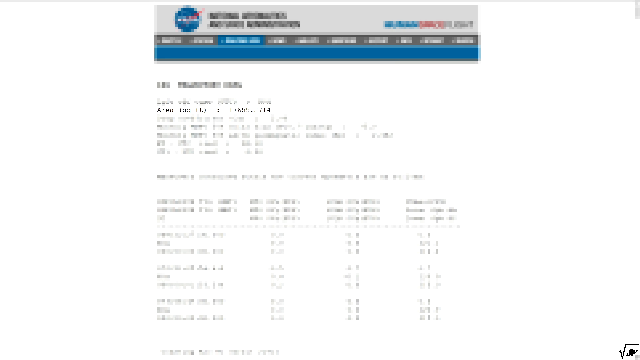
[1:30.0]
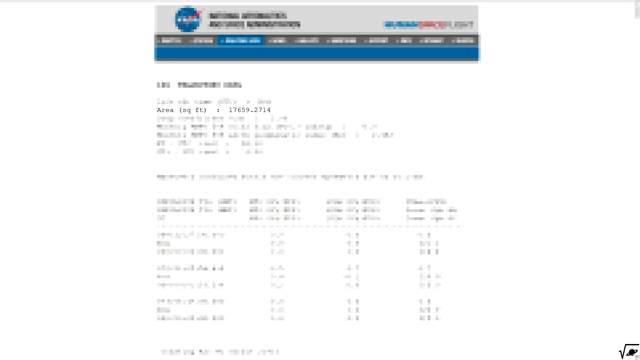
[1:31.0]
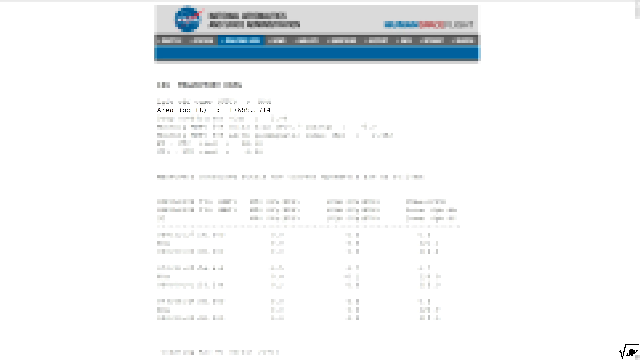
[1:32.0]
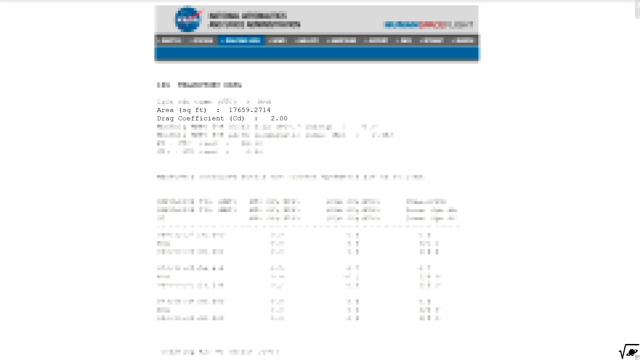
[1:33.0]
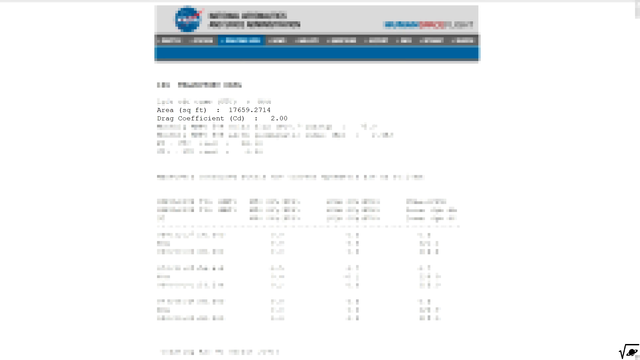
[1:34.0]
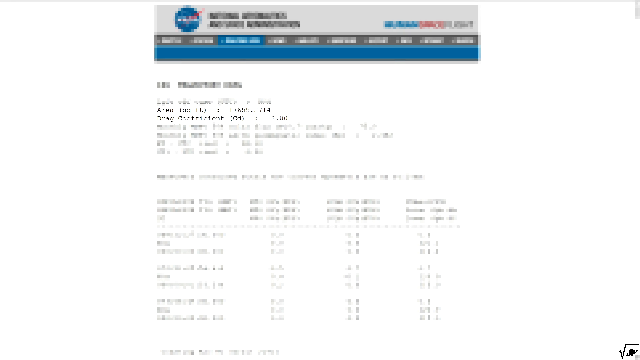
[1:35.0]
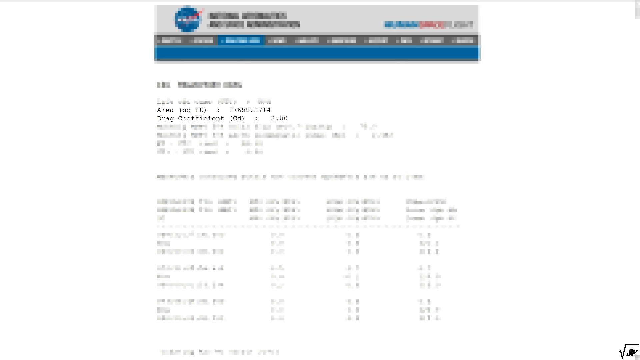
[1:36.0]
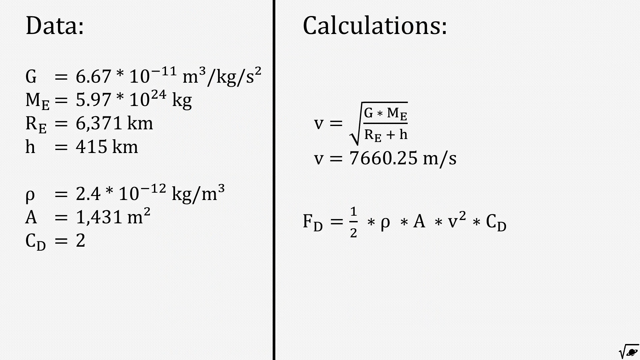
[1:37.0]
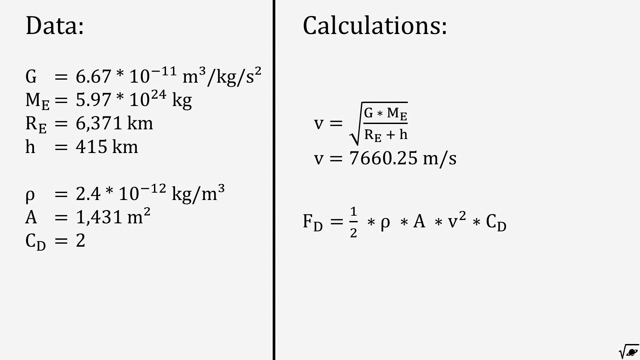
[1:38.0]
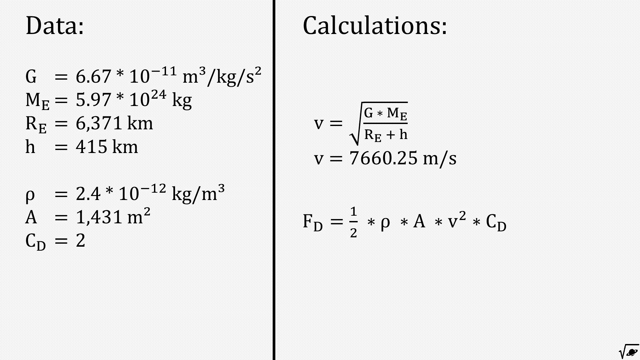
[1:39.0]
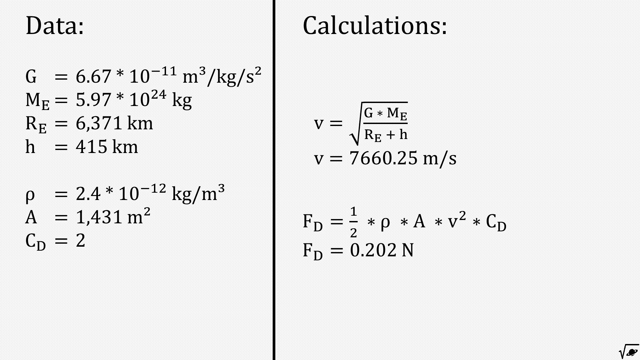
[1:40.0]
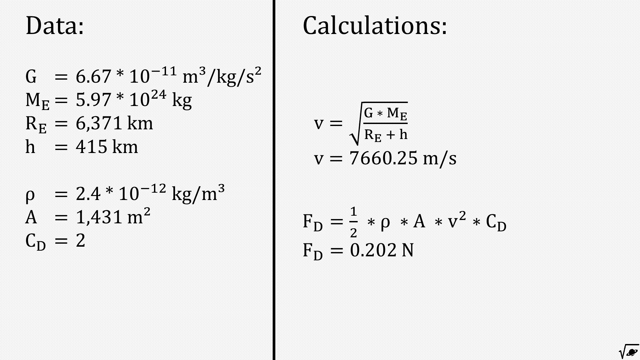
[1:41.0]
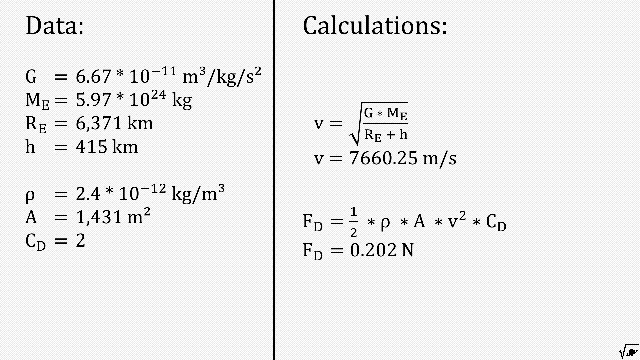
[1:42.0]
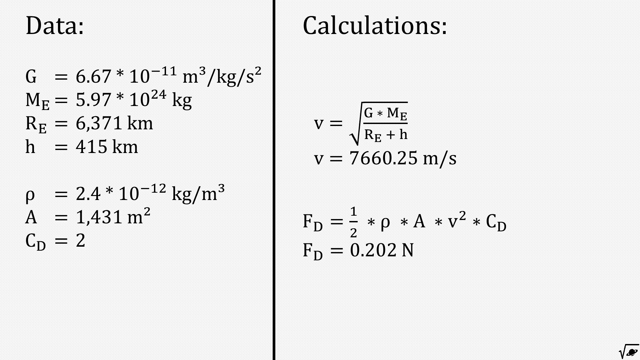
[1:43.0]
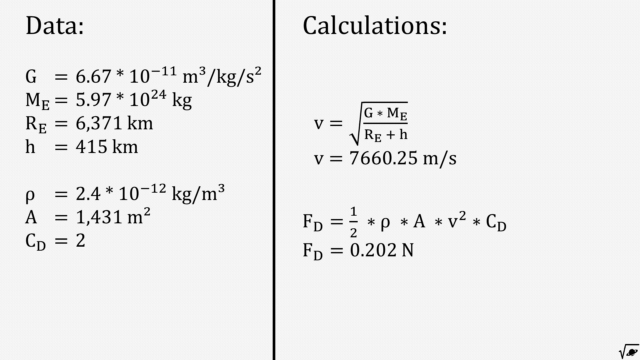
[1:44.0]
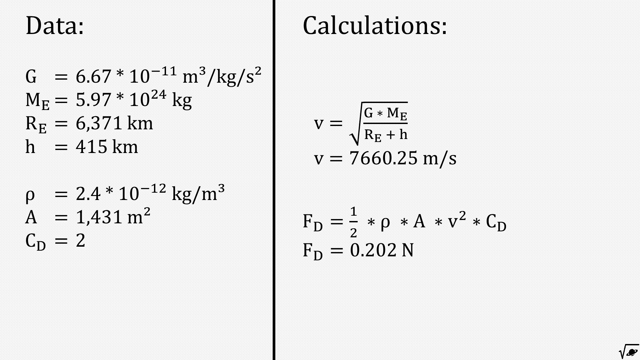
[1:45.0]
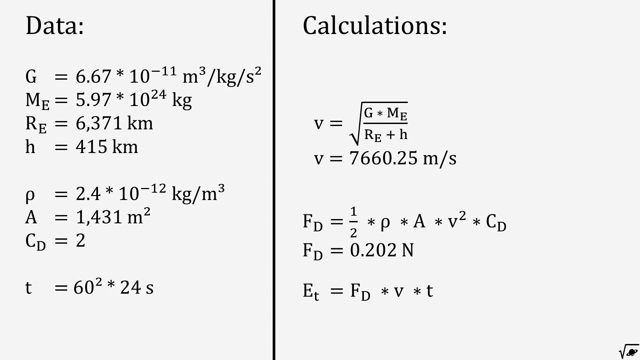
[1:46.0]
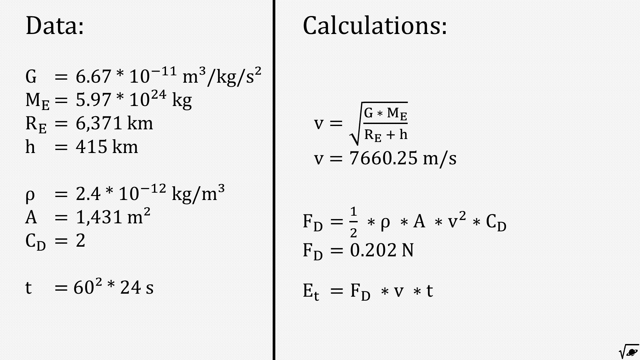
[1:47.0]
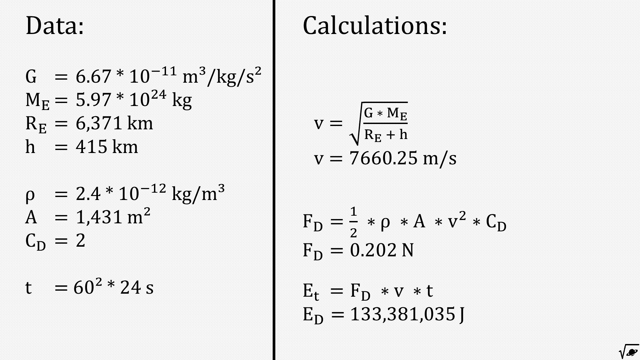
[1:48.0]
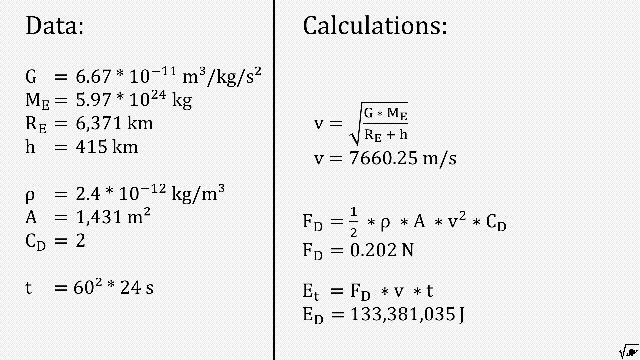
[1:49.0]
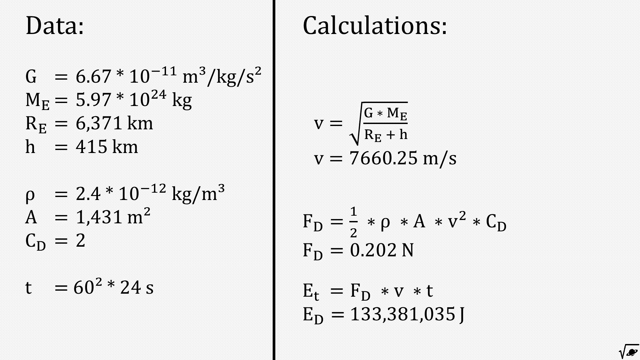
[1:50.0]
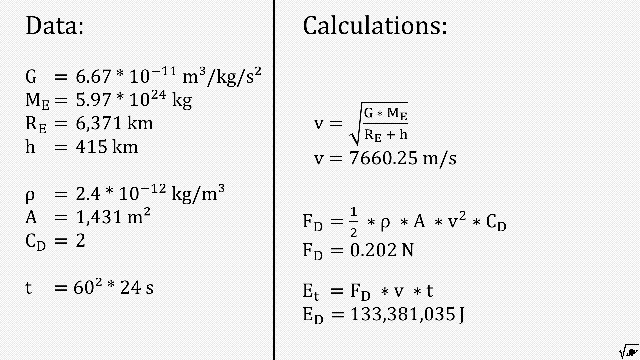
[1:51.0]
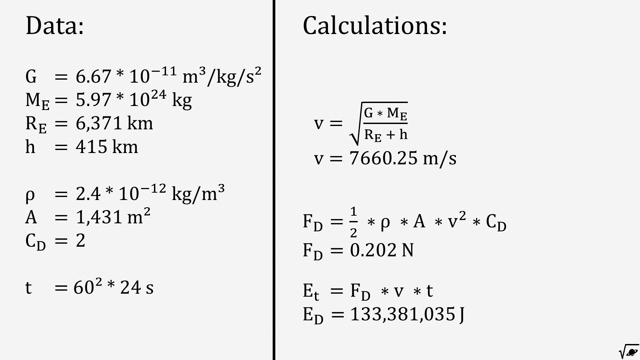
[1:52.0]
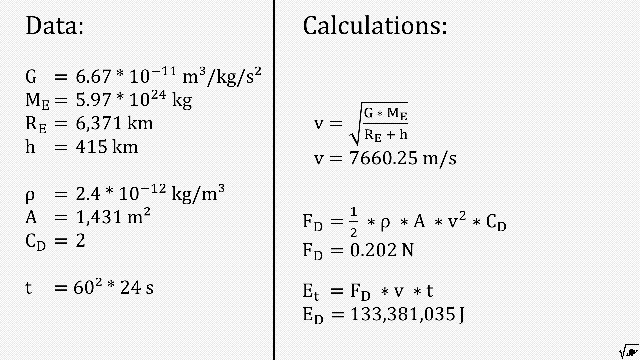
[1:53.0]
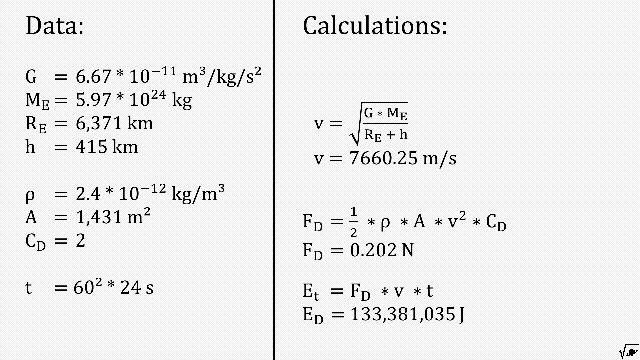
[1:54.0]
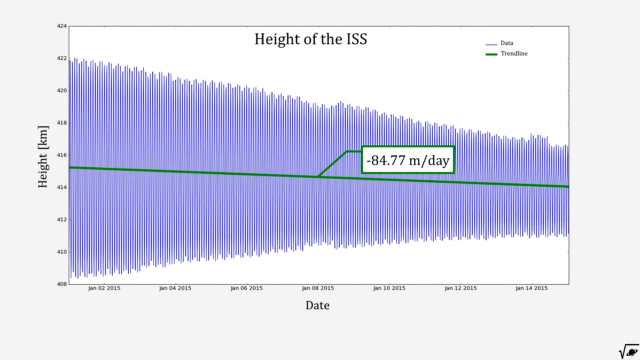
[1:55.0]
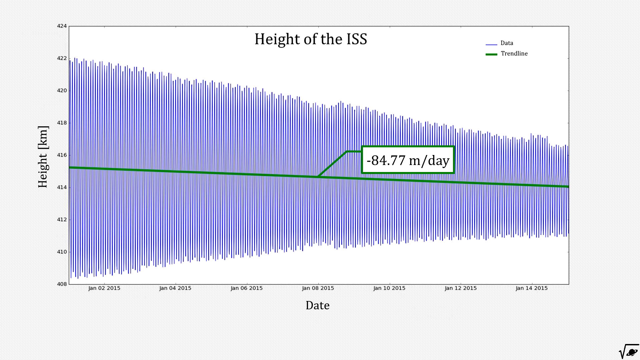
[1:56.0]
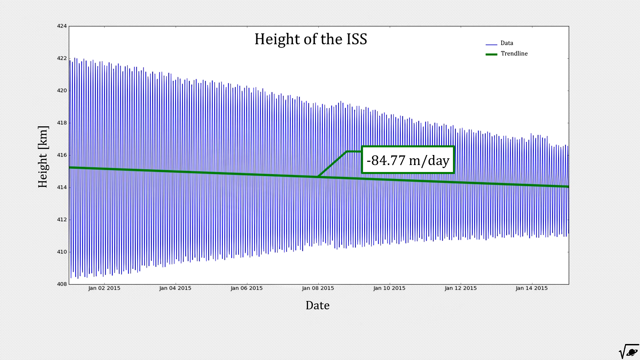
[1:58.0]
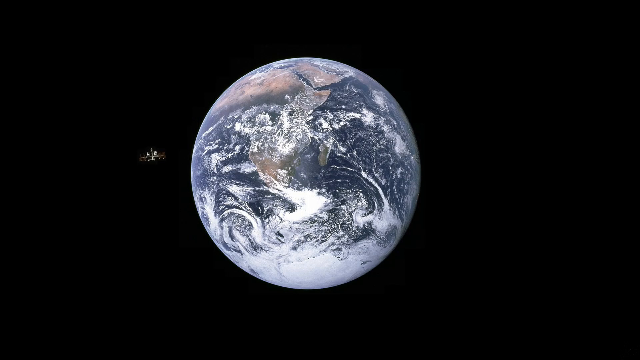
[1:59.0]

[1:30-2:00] A document is barely visible and looks very blurry. Then the part of the page with a white background appears, reading "data" in black, with a vertical line going down, some space, and "calculations:". Under data it reads G = 6.67 × 10^-11 m³/kg/s², Me = 5.97 × 10^24 kg, Re = 6,371 km, h = 415 km, p = 2.4 × 10^-12, A = 1,431, and CD = 2. The calculation reads FD = 1/2 × p × A × V² × CD.